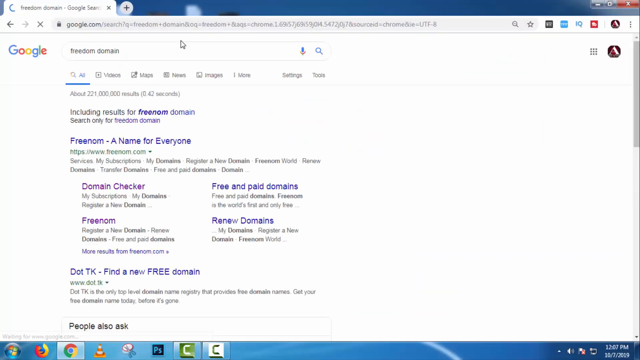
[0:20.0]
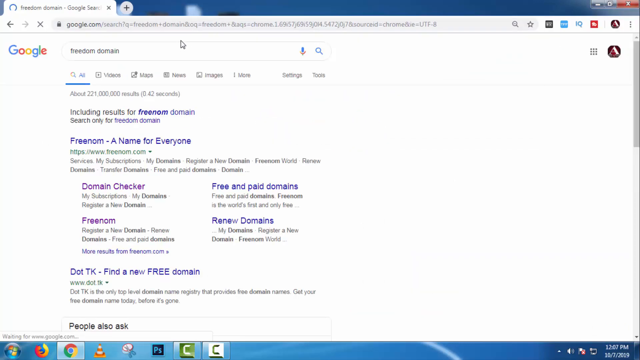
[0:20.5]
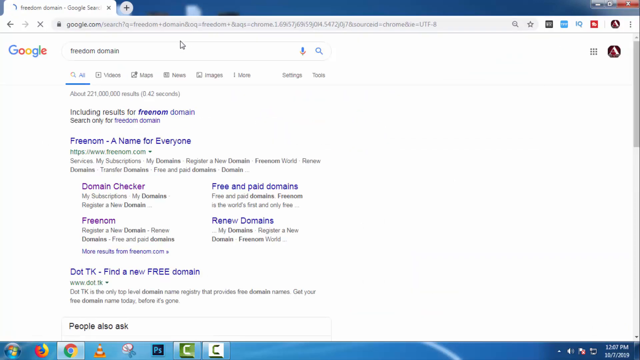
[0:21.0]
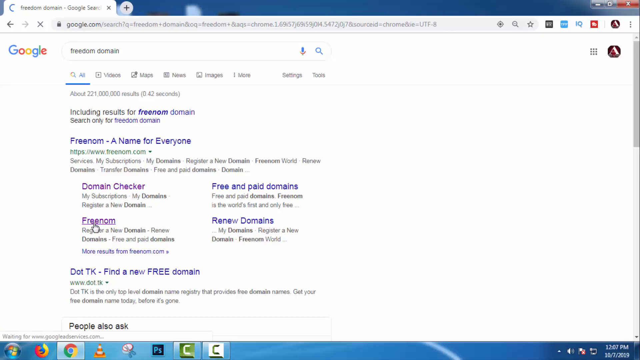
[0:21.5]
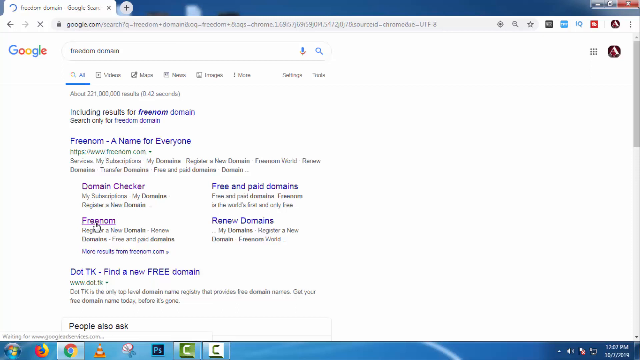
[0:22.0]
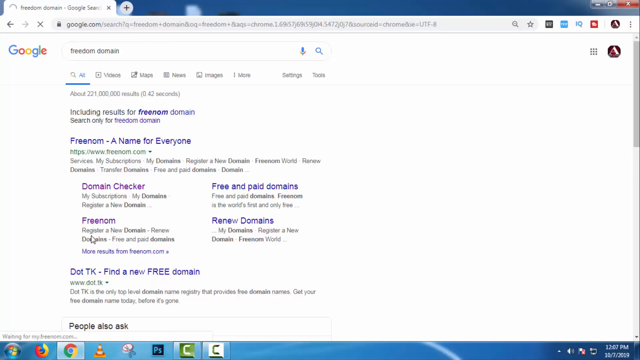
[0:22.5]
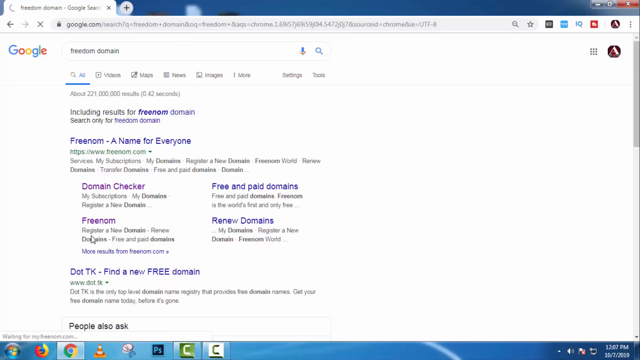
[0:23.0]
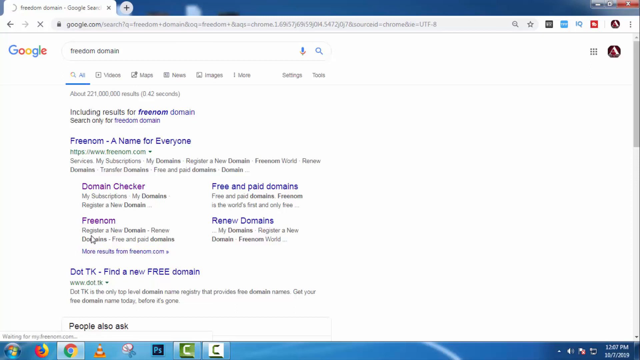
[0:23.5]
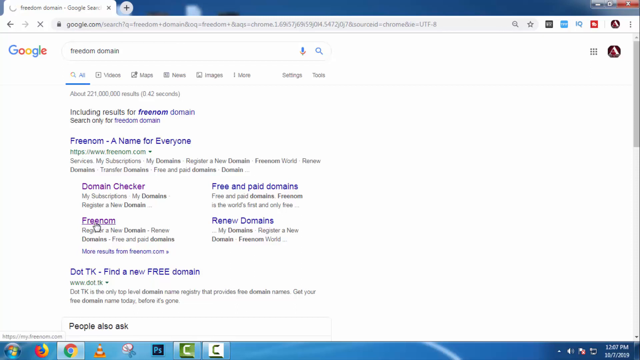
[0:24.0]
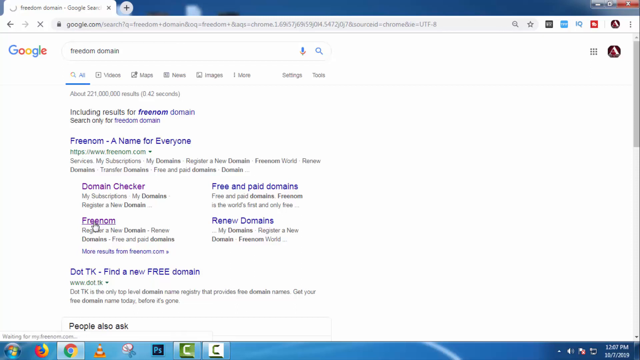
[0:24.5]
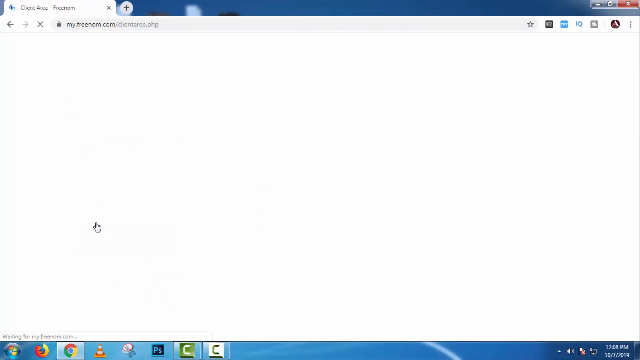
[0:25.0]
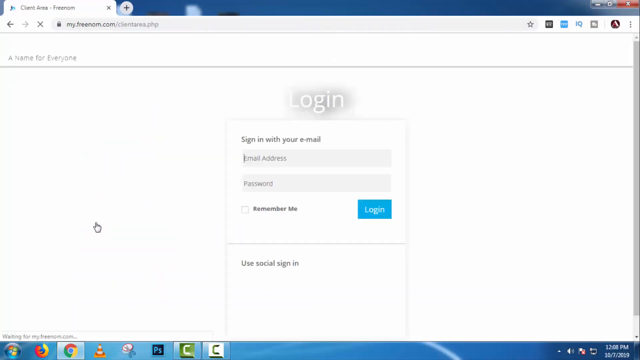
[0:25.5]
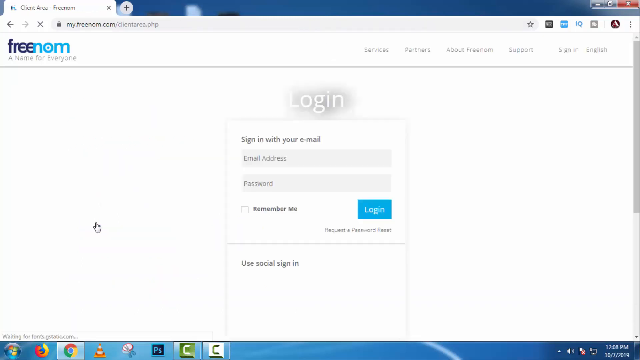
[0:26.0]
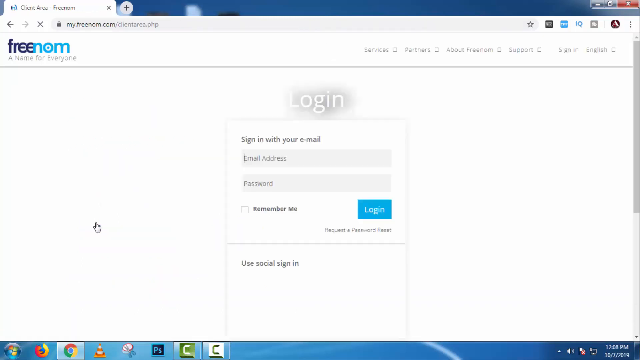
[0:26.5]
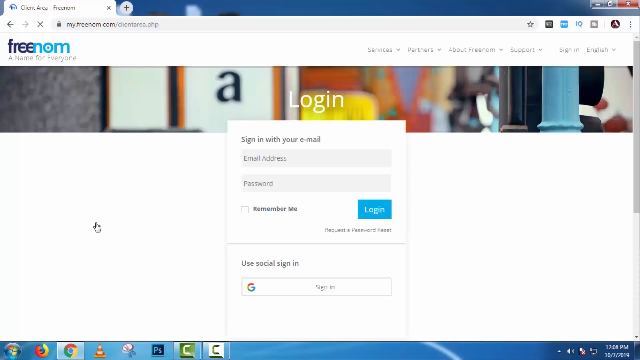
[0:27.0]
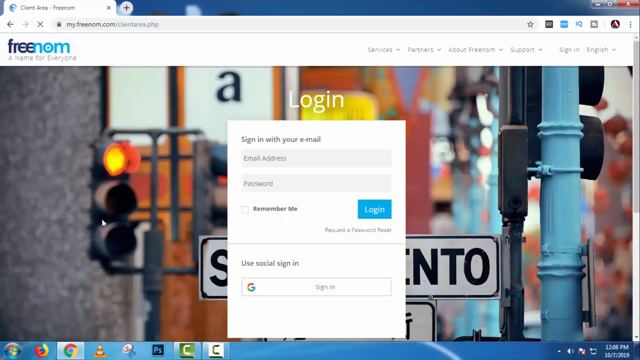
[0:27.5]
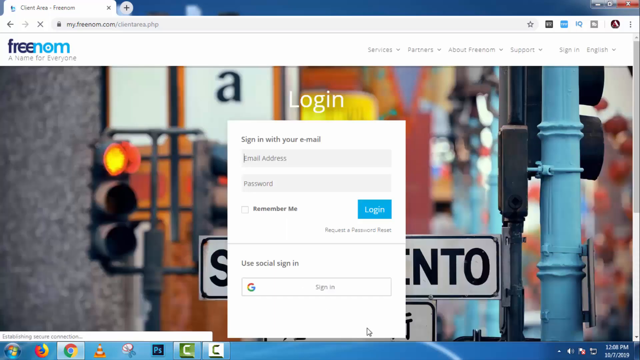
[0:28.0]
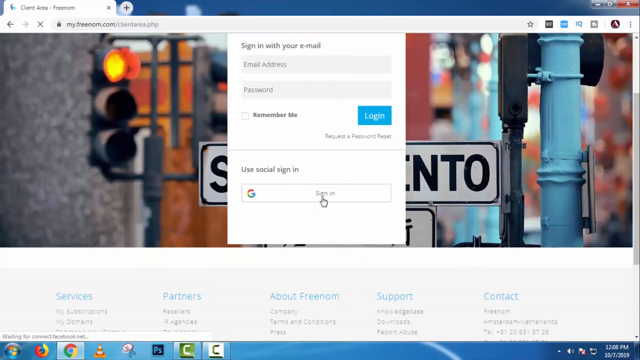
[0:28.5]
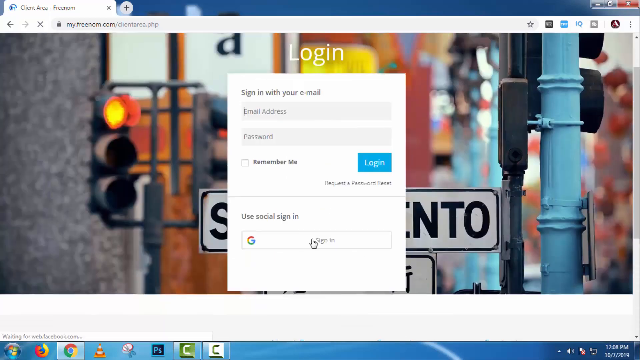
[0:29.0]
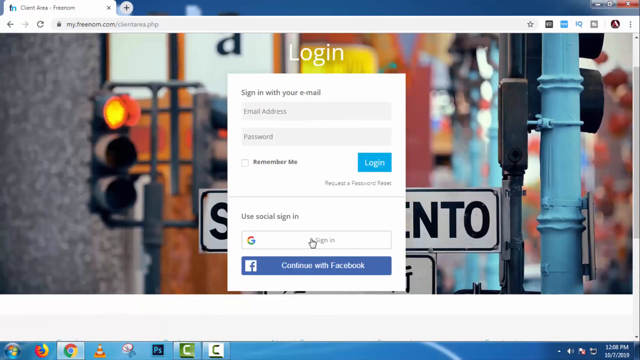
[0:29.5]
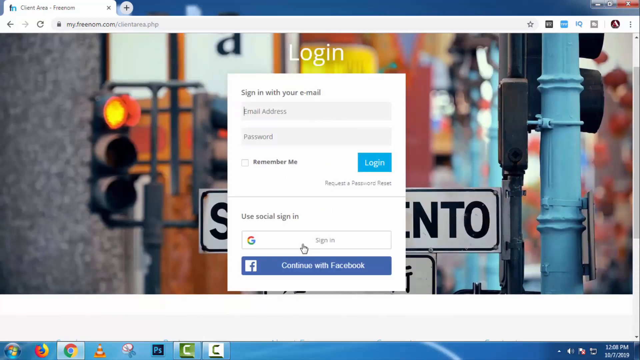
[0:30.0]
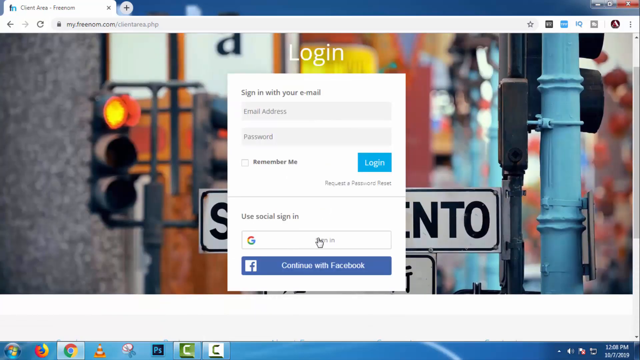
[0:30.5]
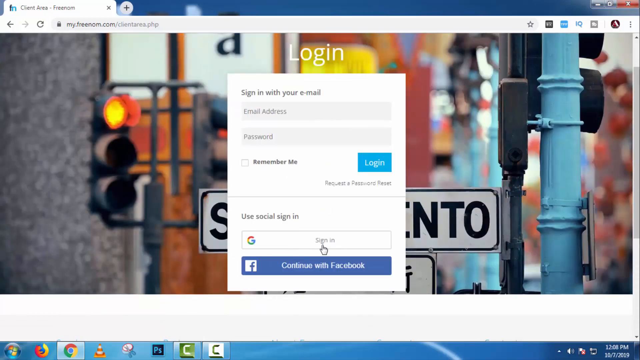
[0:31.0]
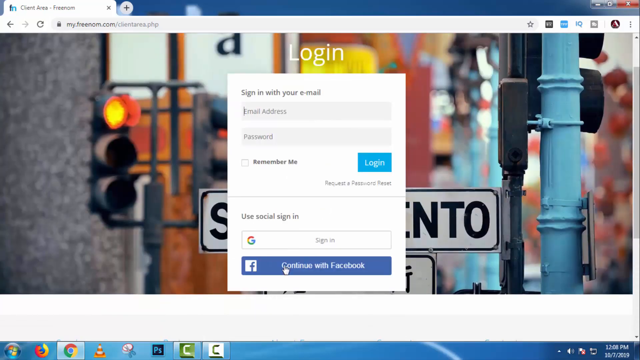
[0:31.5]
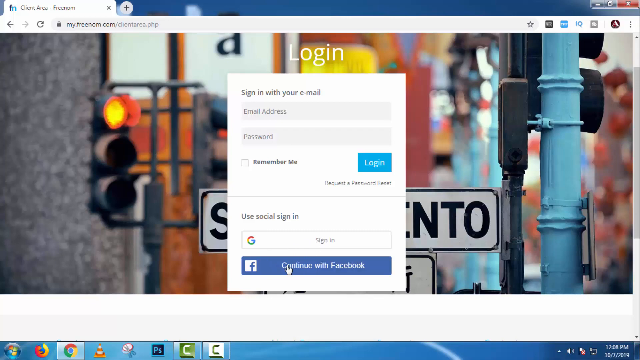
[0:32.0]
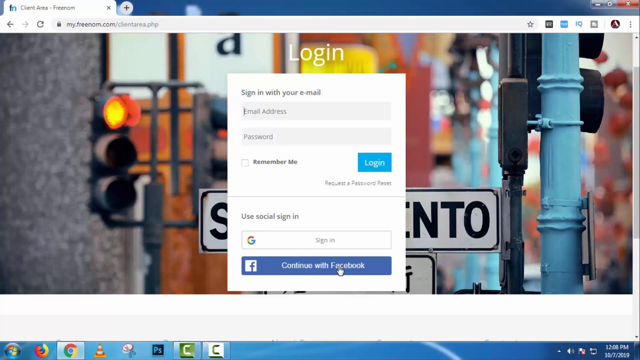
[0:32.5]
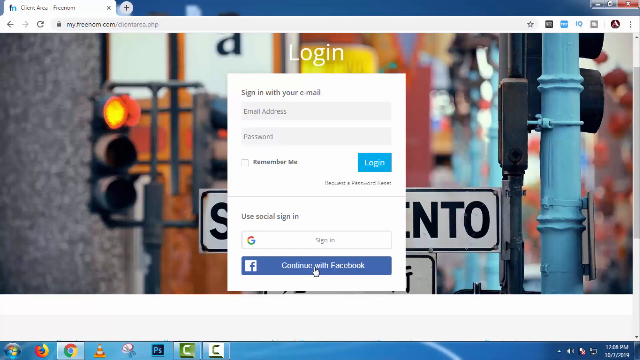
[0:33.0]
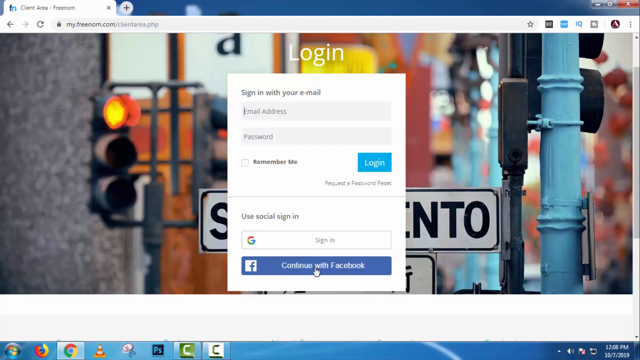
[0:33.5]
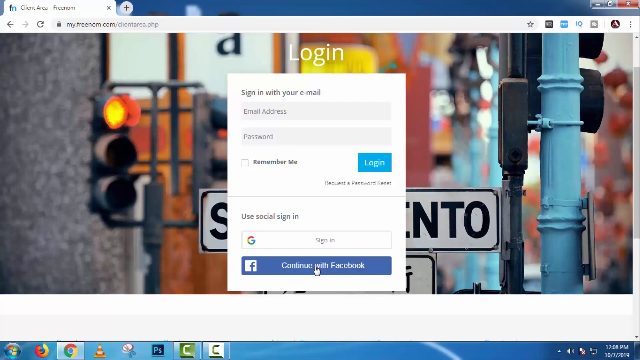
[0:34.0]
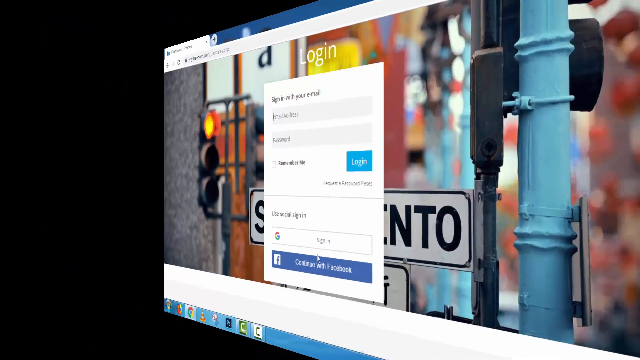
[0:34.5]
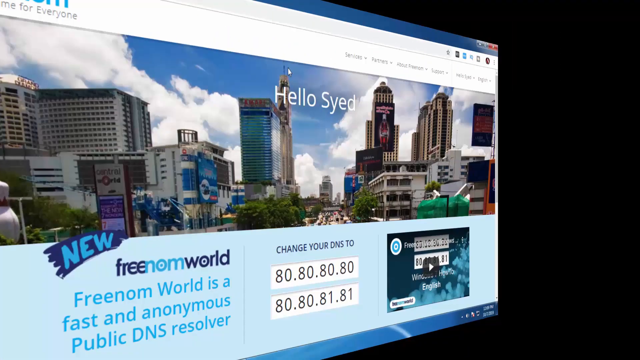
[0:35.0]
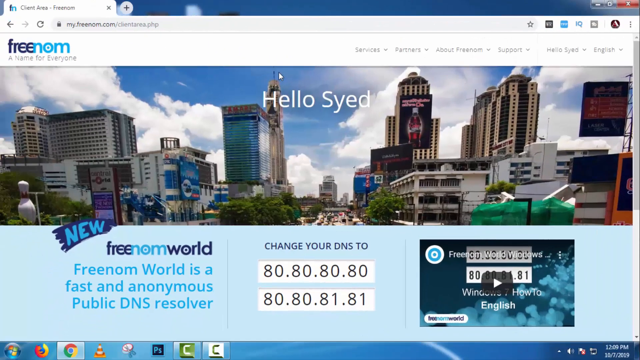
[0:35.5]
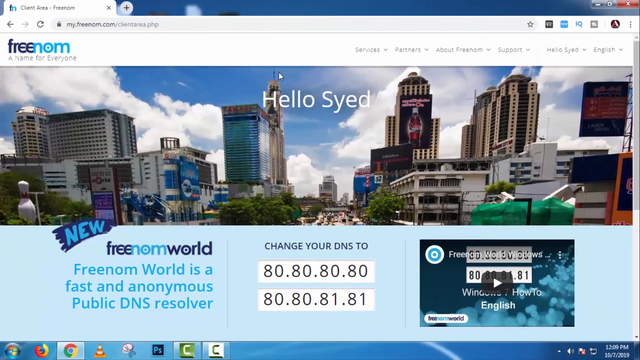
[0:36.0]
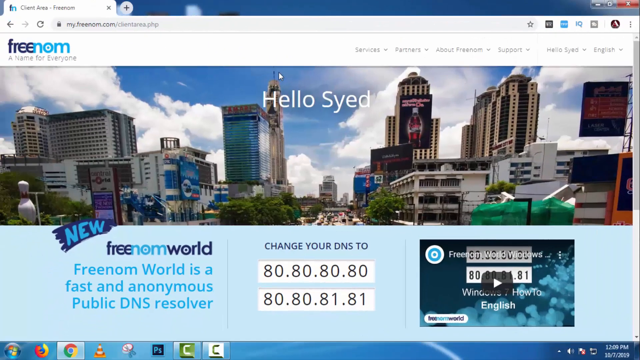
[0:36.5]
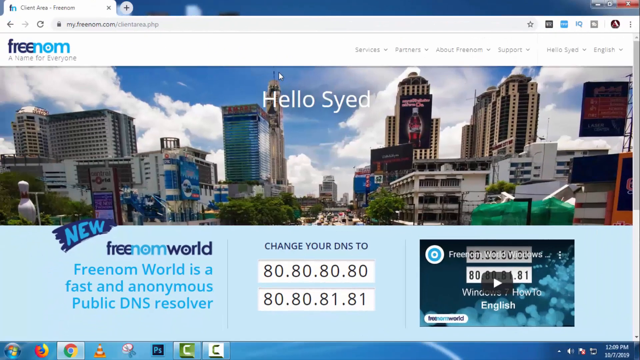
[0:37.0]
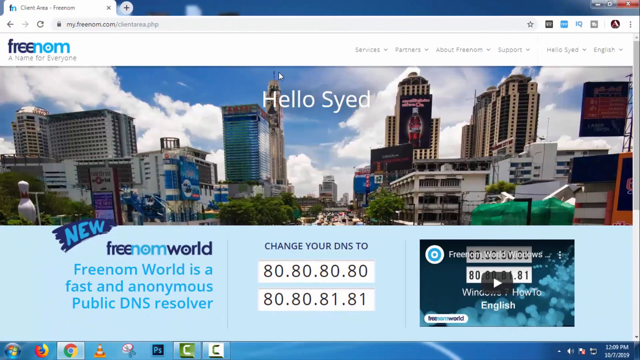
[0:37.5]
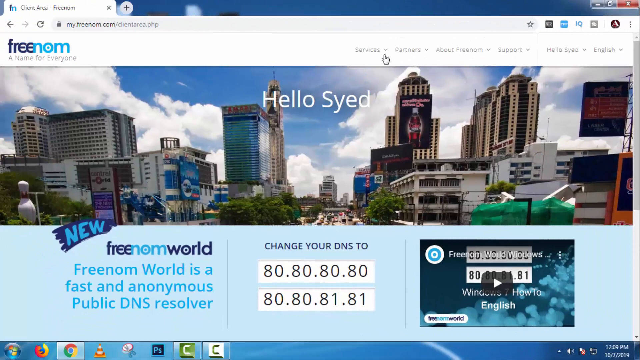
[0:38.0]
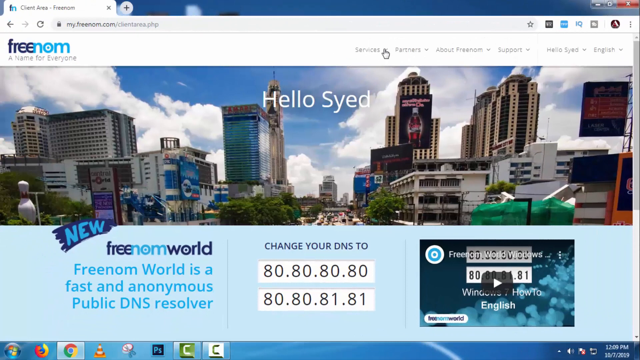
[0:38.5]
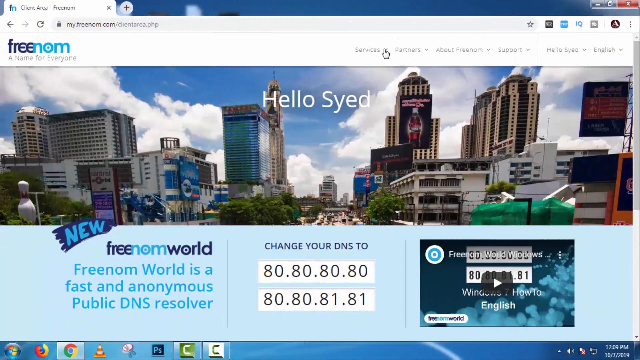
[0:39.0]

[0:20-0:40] "Freedom domain" is typed into the smaller search window at the top, not the main Google search box. What appear to be search results come up, a list of different text options like a normal Google search. The browser then apparently goes to a website called myfreenom.com. A small logo in the upper left reads "Freenom" in dark blue and a turquoise blue, the letters squished together. A login box comes in at the center with places for an email address and password. The background is a photo of city street lights, apparently Sacramento in the back, with a kind of light turquoise light post on the right and out-of-focus street lights, kind of an urban scene. Apparently the "continue with Facebook" button at the bottom is clicked. The whole screen kind of flips over, and, seemingly after logging in, white text reads "hello Syed" over a big skyline photo that takes up most of the screen. In the lower left the text reads "Freenom World is a fast and anonymous public DNS resolver." A bunch of numbers are in the middle, and a little photo box is in the lower right.